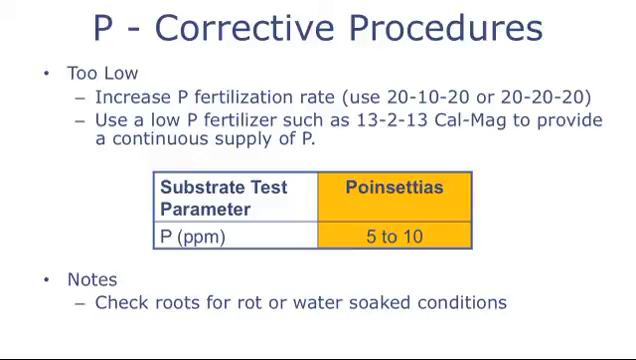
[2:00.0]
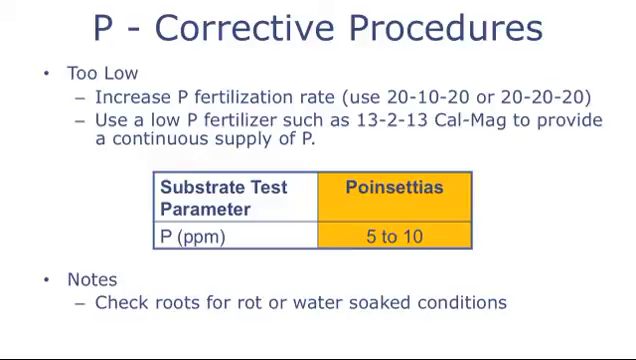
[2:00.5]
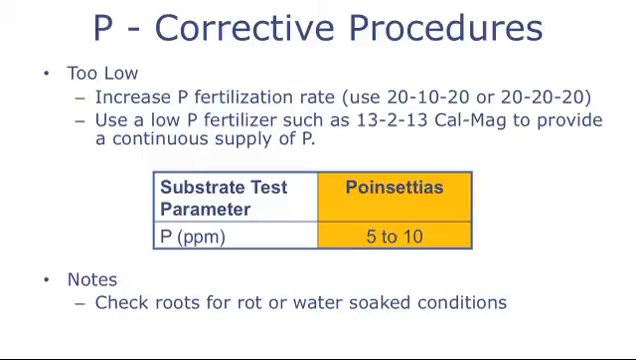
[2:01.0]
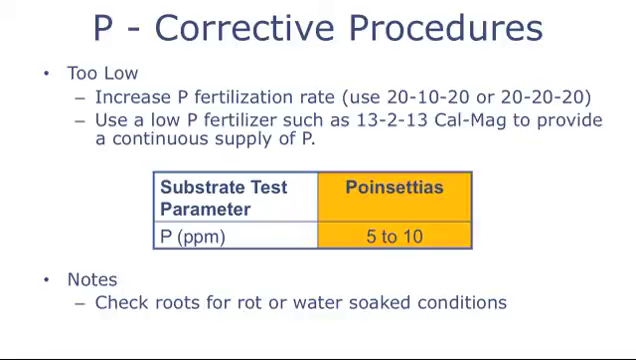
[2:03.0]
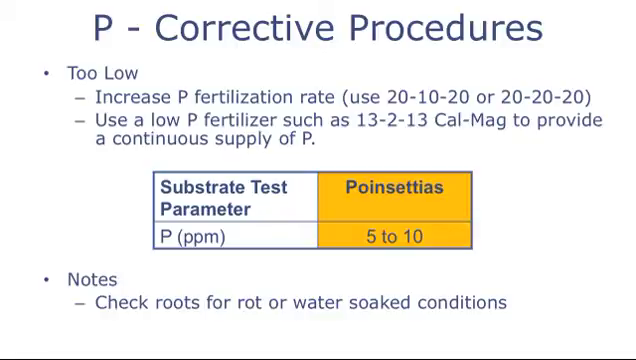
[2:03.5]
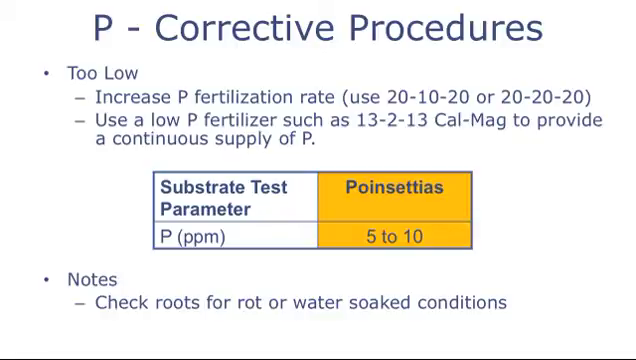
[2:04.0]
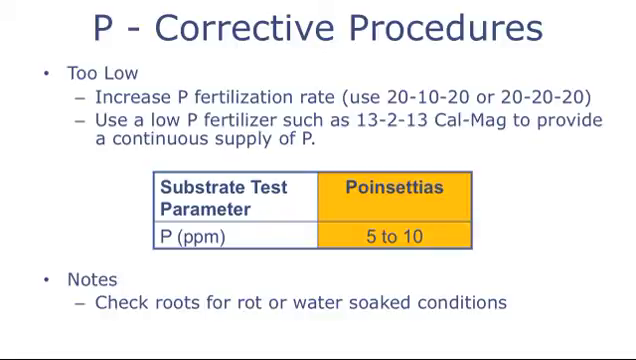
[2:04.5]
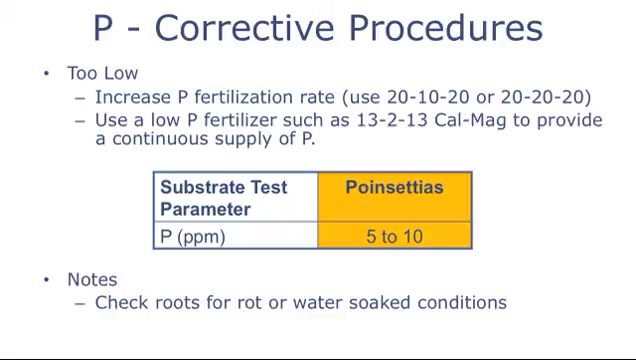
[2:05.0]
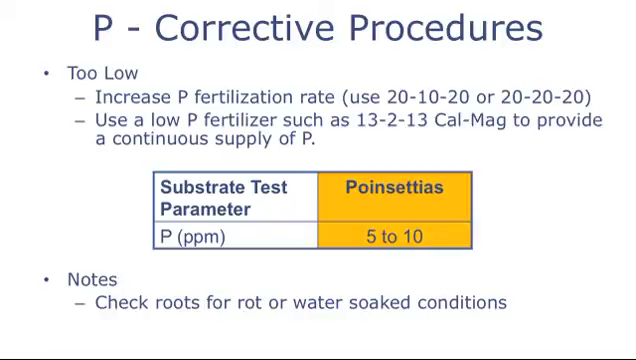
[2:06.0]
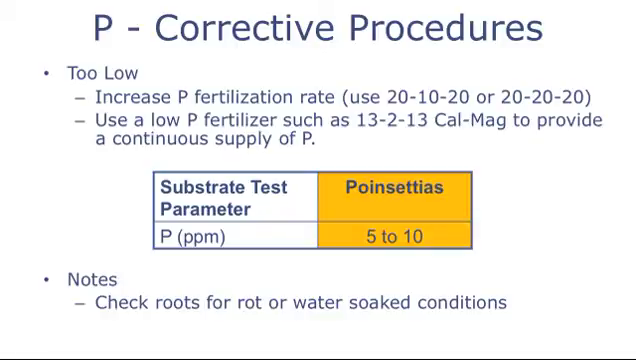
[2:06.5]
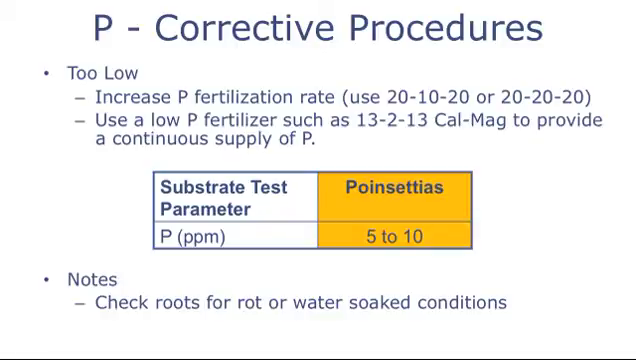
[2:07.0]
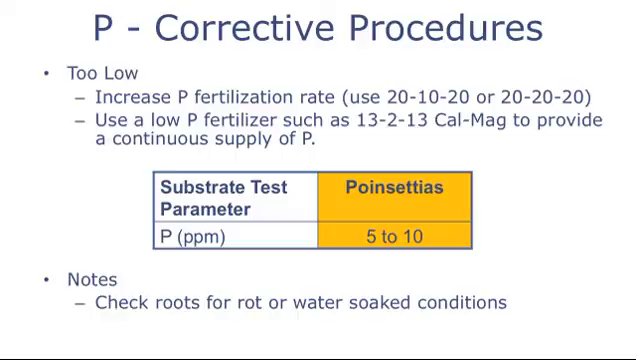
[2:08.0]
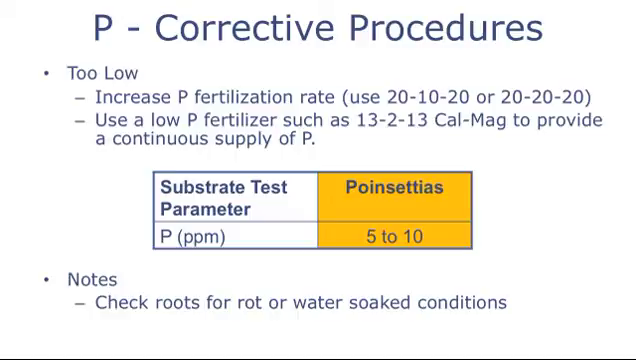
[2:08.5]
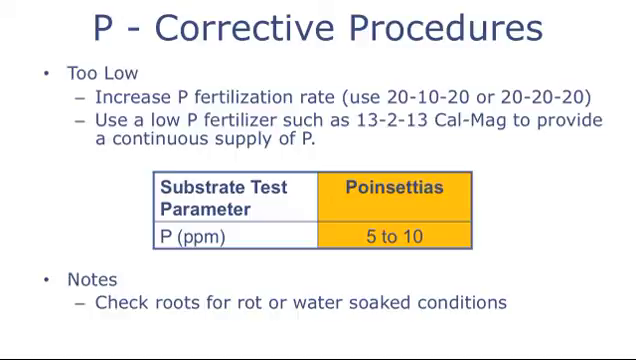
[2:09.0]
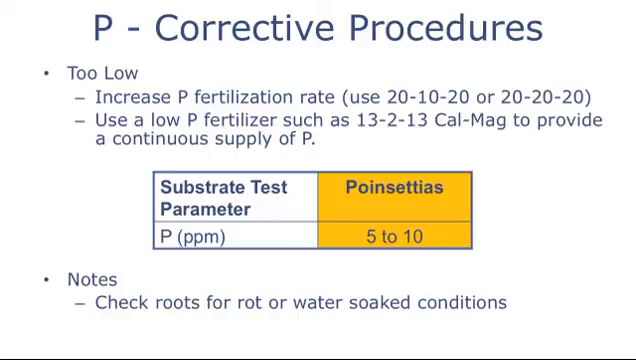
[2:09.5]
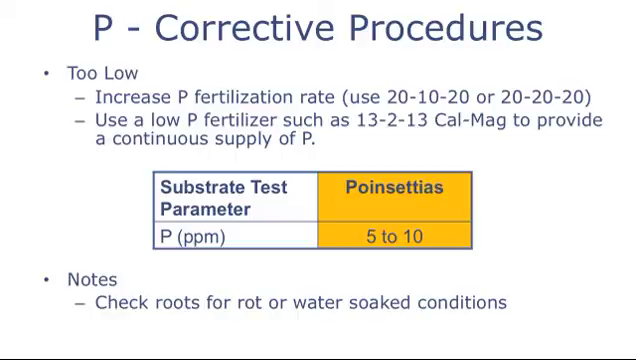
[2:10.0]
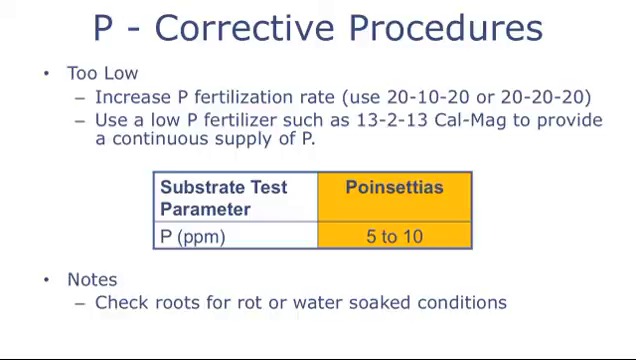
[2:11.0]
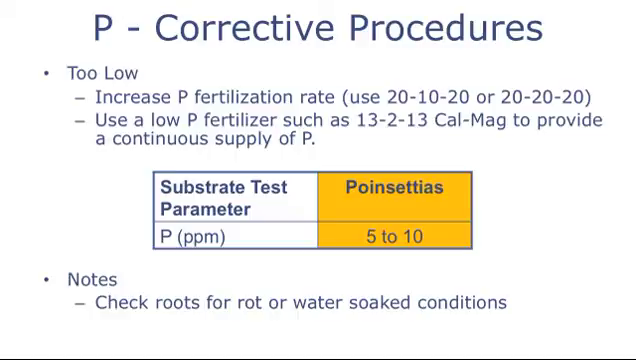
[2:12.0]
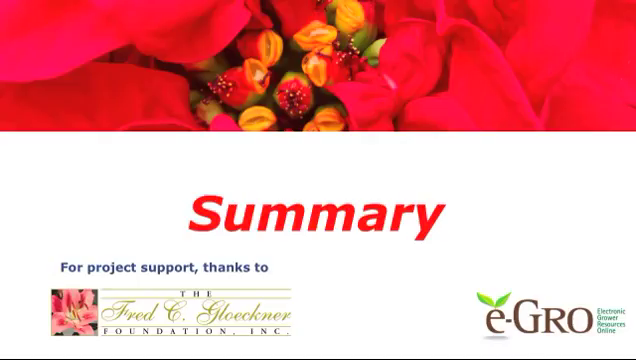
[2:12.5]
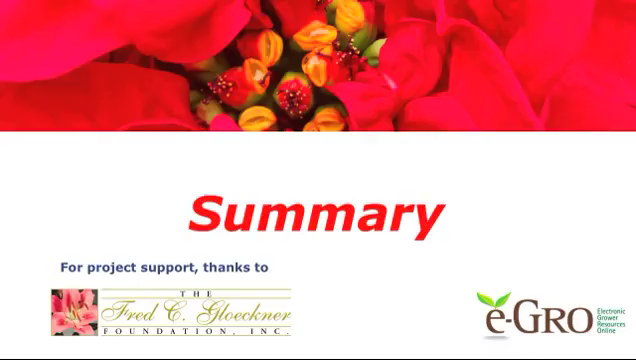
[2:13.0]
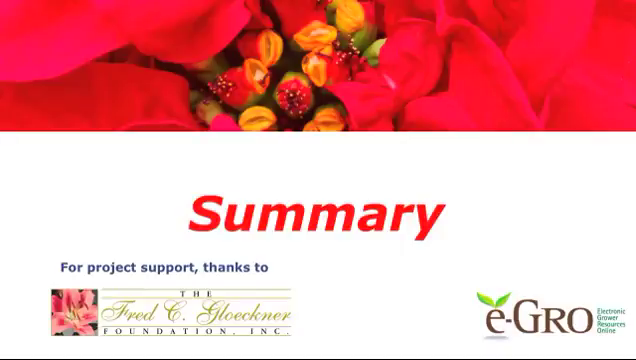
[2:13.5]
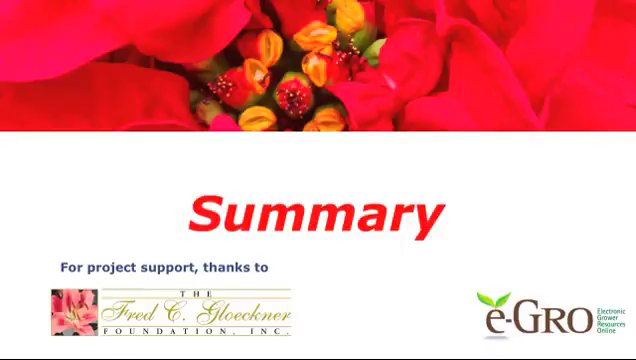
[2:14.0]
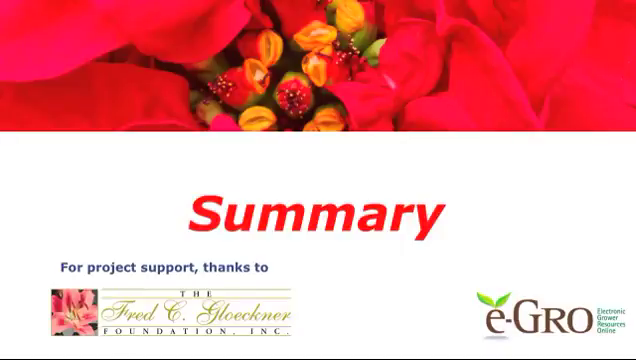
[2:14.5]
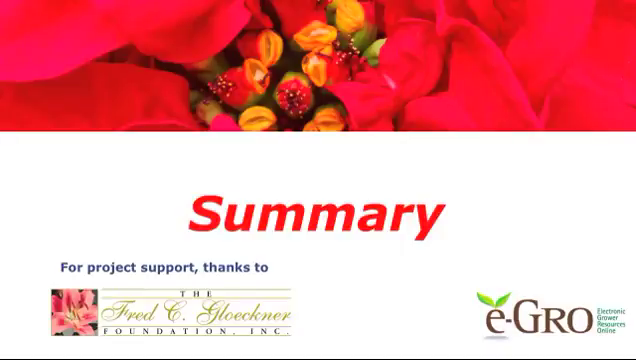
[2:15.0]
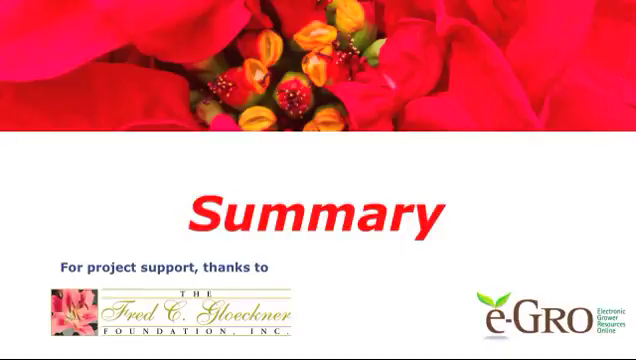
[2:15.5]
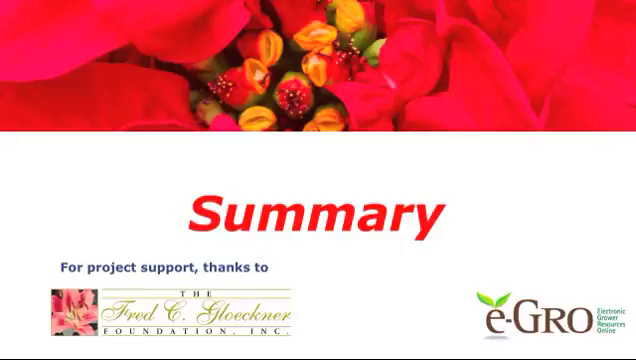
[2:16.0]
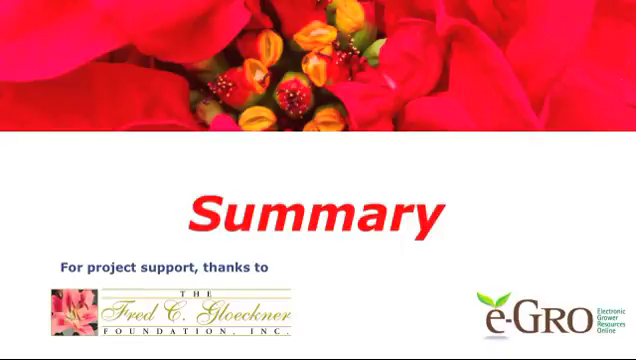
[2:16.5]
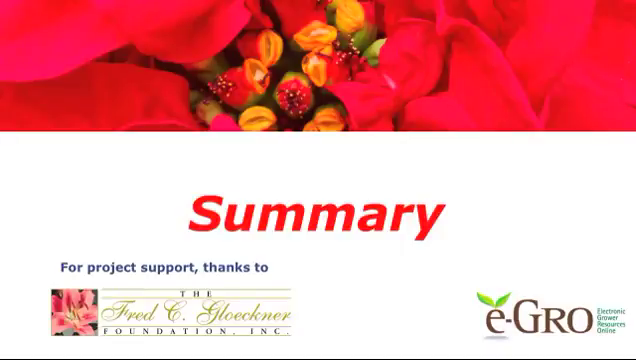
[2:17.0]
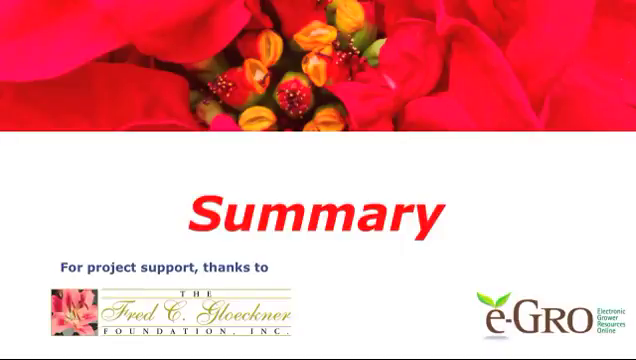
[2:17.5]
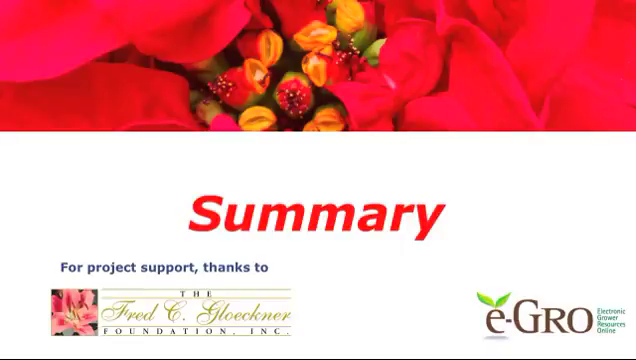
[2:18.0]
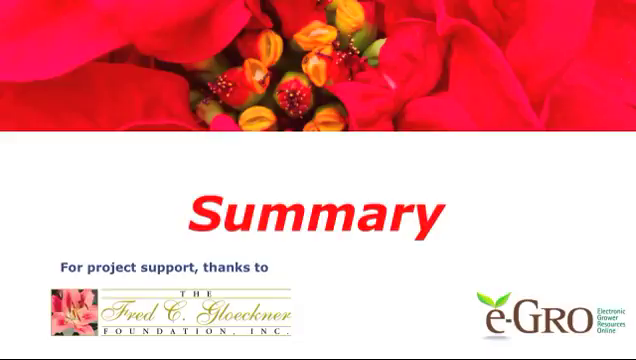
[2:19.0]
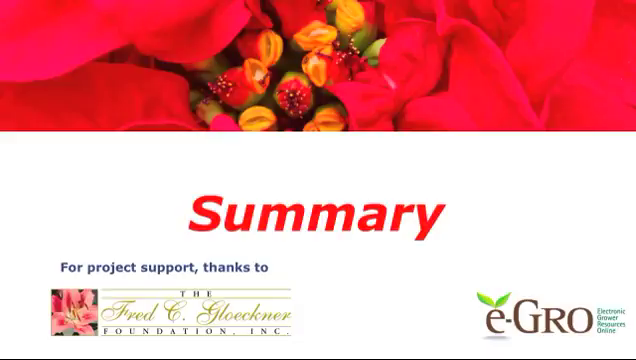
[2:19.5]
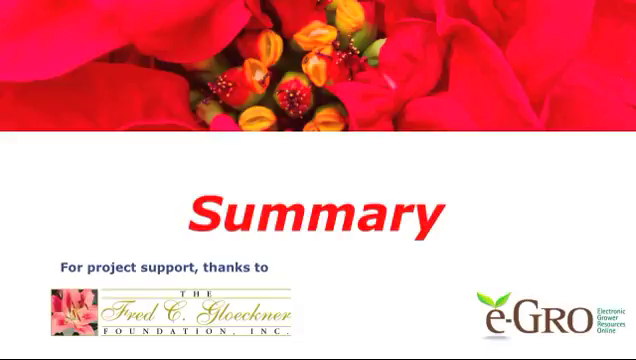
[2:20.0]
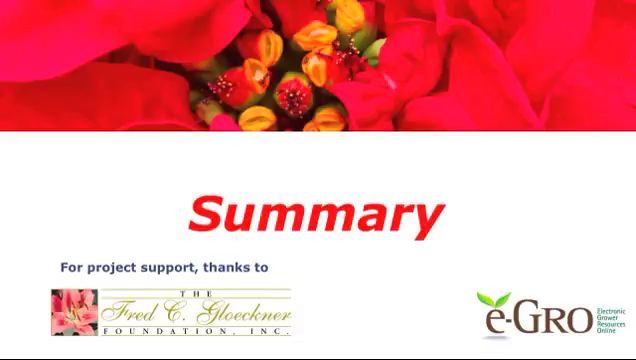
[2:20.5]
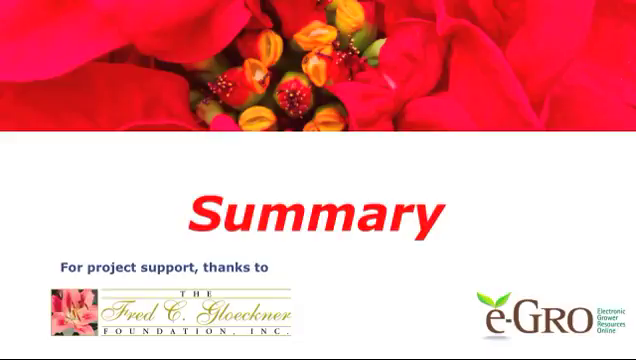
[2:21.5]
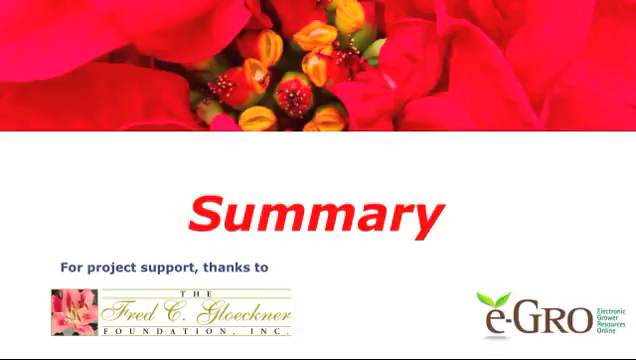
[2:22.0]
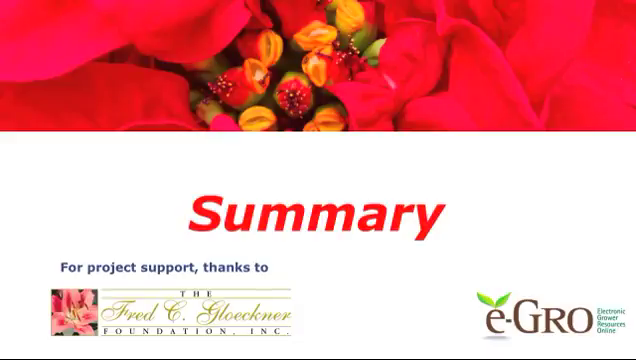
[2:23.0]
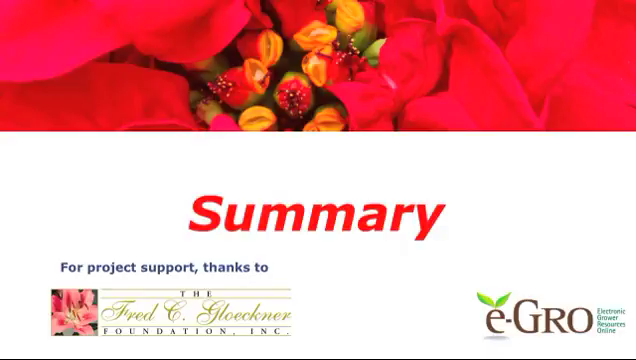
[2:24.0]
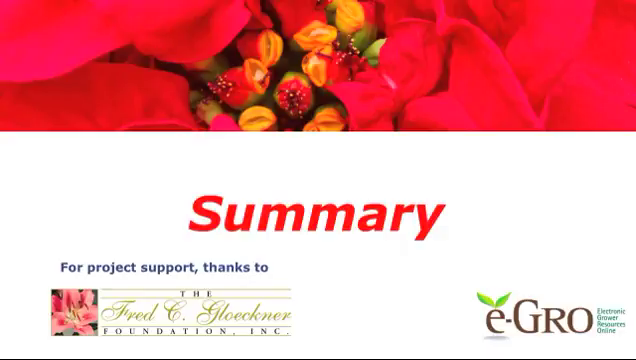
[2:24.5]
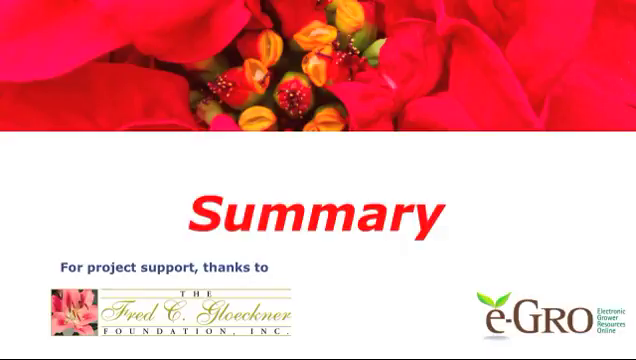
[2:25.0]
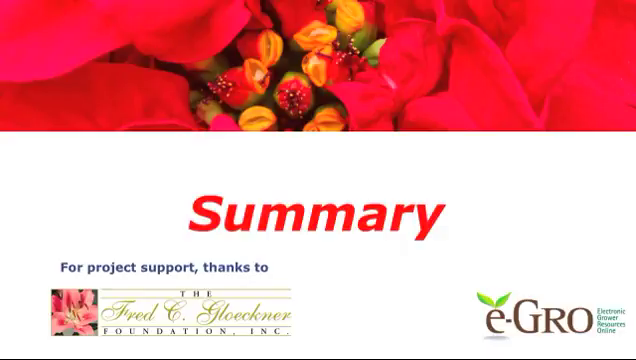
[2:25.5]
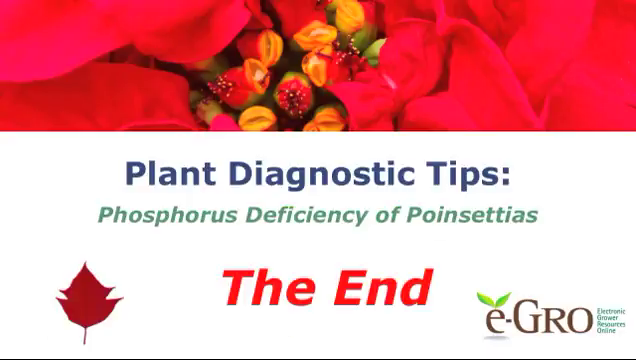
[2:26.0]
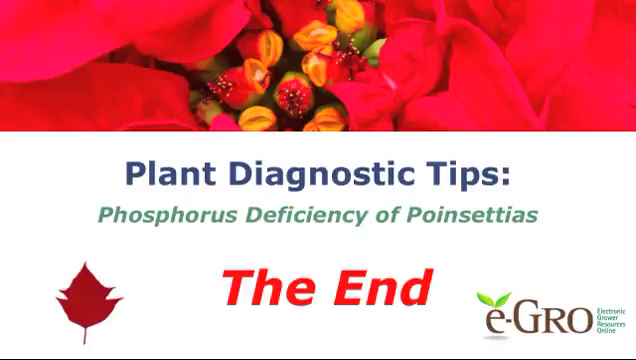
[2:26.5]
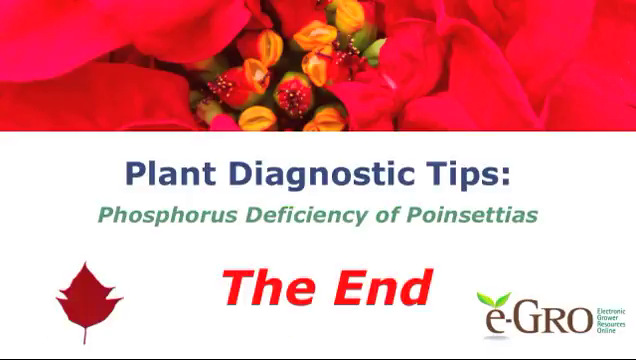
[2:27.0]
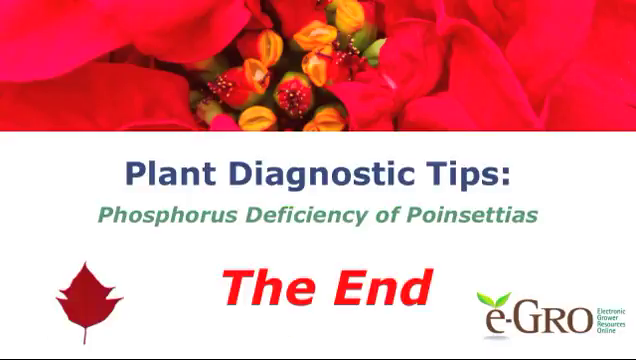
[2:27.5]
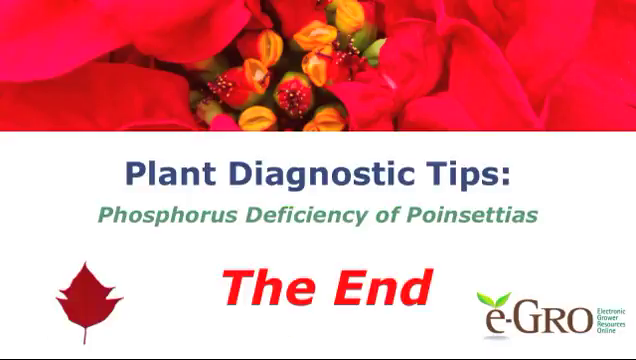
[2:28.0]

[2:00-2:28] The slide has "corrective procedures" as its title. Beneath it, a bullet point reads "too low," followed by a hyphen point reading "increase P fertilization rate, (use 2010-20 or 2020-20" and a second hyphen point reading "use a low P fertilizer such as 13-13 CalMag to provide a continuous supply of P." In the center of the screen is a small chart with a header on the left reading "substrate test parameter" in blue text and "P (PPM)" beneath it; on the right, a yellow header reads "poinsettias" with "five to 10" beneath it. At the bottom of the screen, a second bullet point reads "notes," with a hyphen point beneath it reading "check roots for rot or water soaked conditions." The slide then progresses to another white background with a zoomed-in, high-definition picture of a poinsettia at the top, taking up about a third of the screen. In the center, red lettering reads "summary." On the bottom left, blue lettering reads "for project support, thanks to," with a label beneath it reading "the Fred C. Glockner Foundation Inc." On the bottom right, it reads "eGrow" and "electronic growth resources online." It then transitions to another slide with "plant diagnostic tips" in blue in the center of the screen, "phosphorus deficiency of poinsettias" in green text beneath it, and "the end" in red text beneath that. On the left is a picture of a leaf, and on the right is the eGrow electronic grower resources online logo.